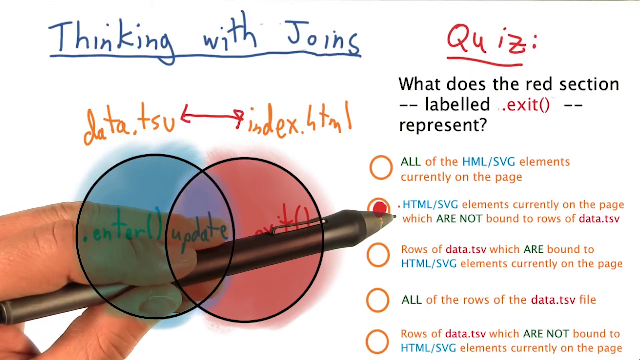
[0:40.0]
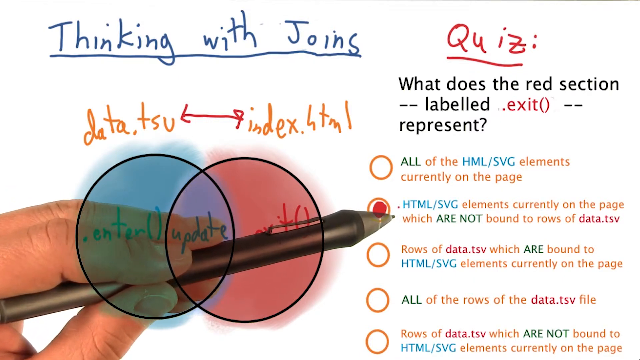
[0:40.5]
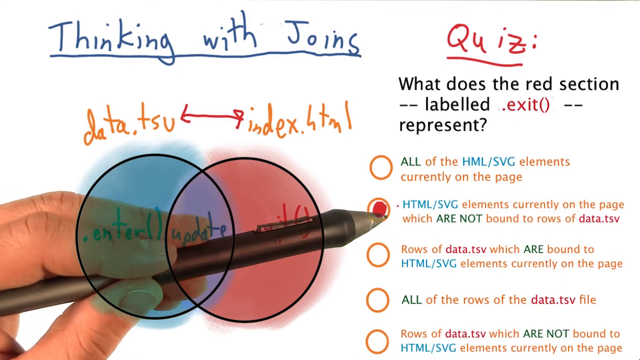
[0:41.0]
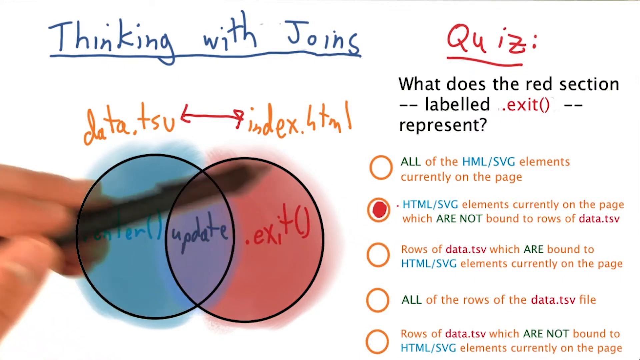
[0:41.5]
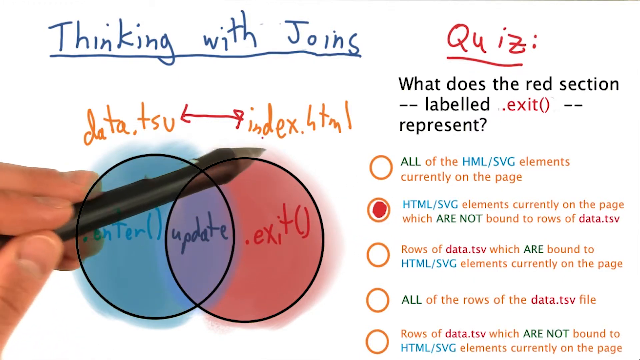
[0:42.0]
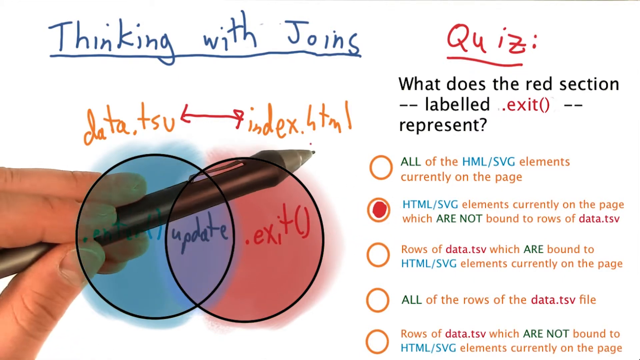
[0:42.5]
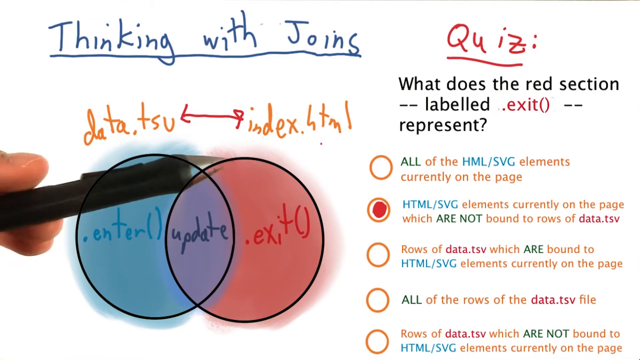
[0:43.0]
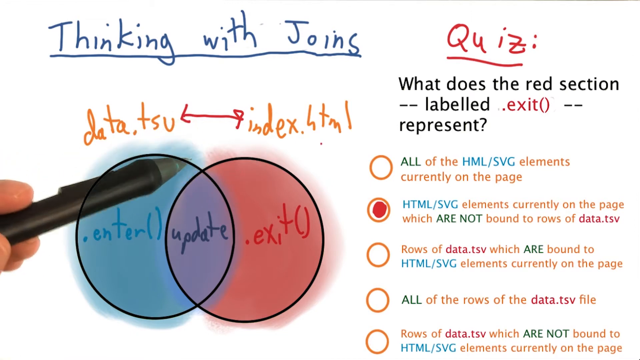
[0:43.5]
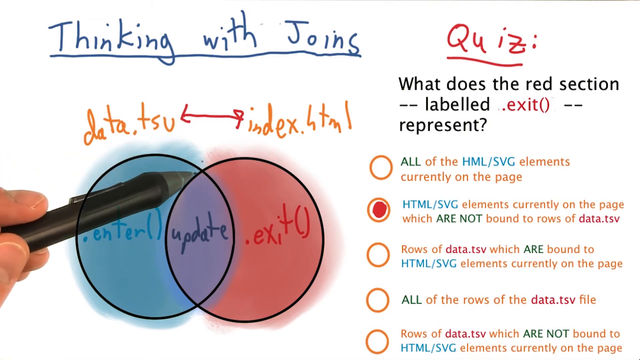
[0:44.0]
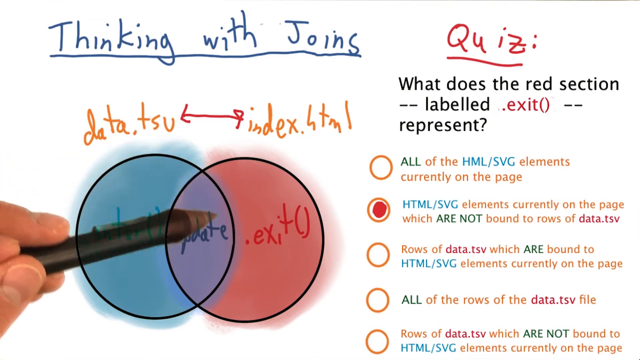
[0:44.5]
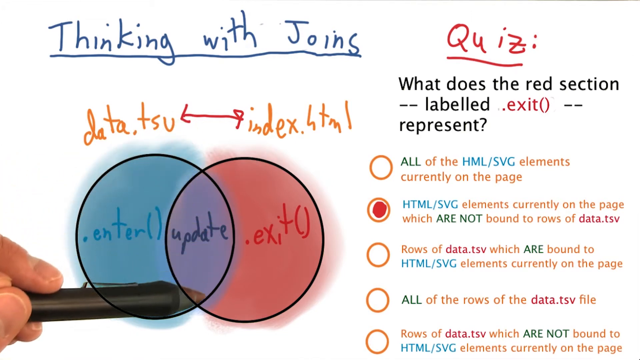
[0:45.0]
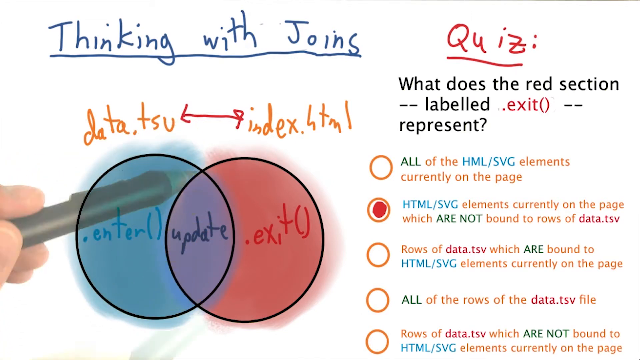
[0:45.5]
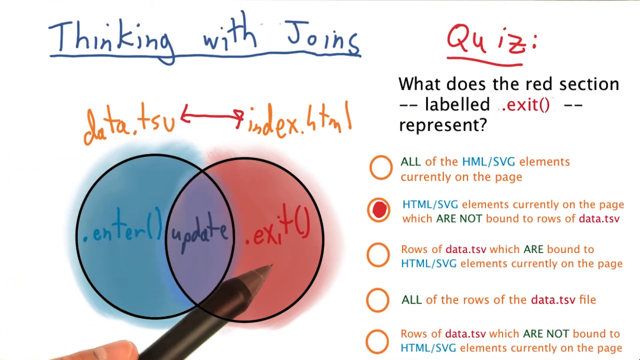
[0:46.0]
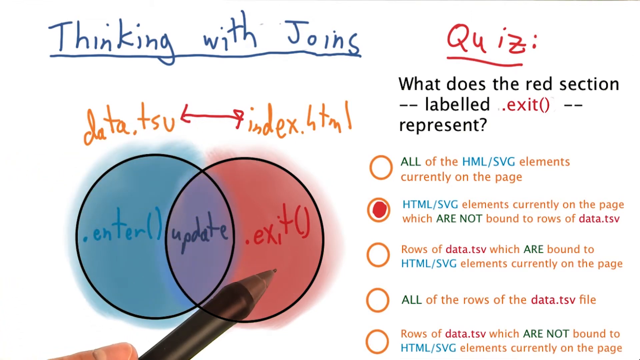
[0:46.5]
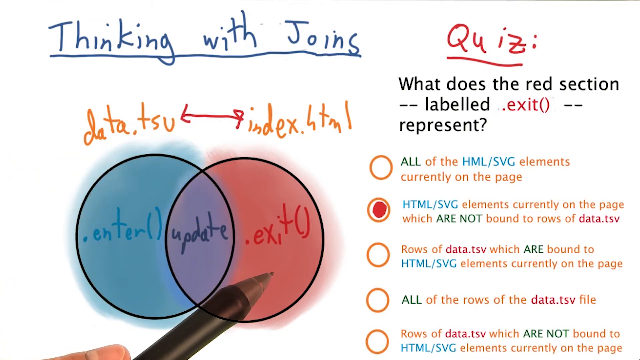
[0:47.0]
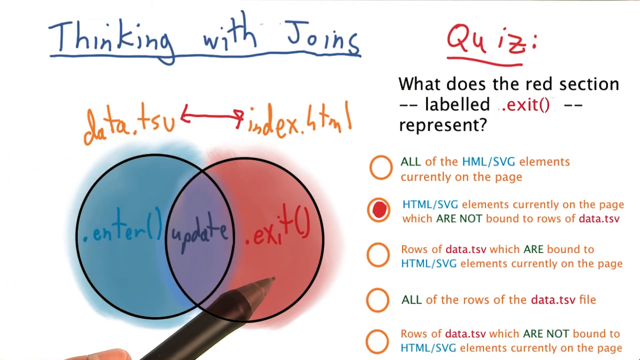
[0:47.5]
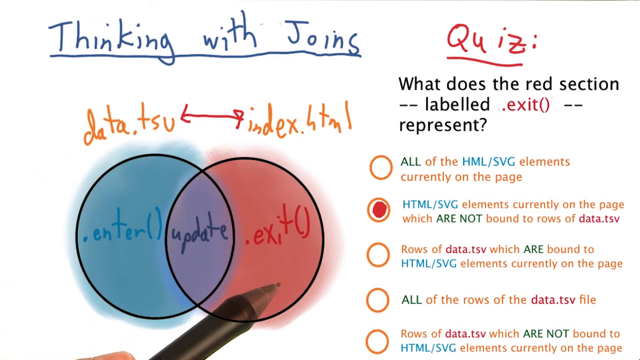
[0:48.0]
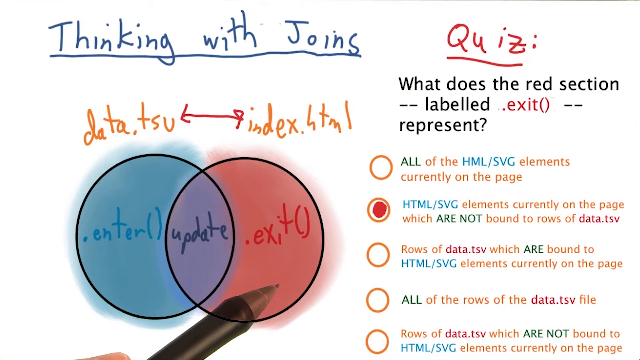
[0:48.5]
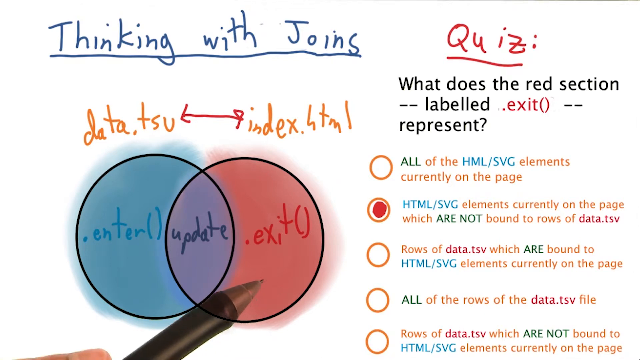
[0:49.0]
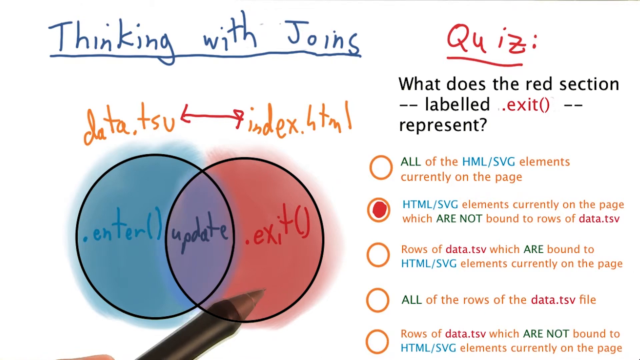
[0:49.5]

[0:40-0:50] The pen hovers over by the quiz again and then moves back toward the Venn diagram. The teacher uses the pen to indicate different sections of the diagram, probably explaining why the quiz answer is correct. The teacher is off screen and cannot be seen, and points toward the exit side of the diagram. The quiz is at the top of the right-hand side of the screen: the word "quiz:" is handwritten in red and underlined, and below it, typed in black, is the question "what does the red section -- labeled .exit() -- represent". There are four choices, each with a large, empty orange circle to be filled in for the correct answer. The first option says "all of the elements currently on the page". The second, "elements currently on the page which are not bound to rows", is filled in with red ink. The third says "rows which are bound to elements currently on the page", and the bottom option says "all of the rows".